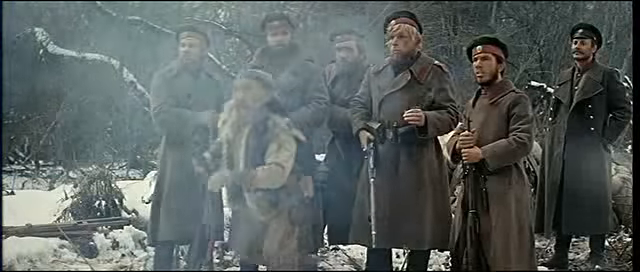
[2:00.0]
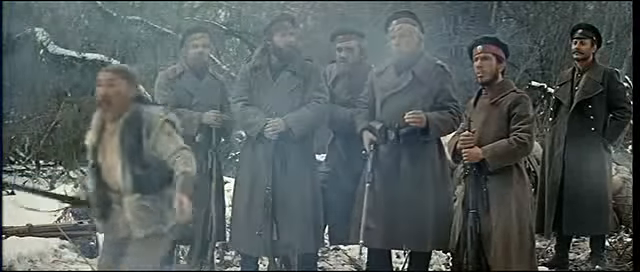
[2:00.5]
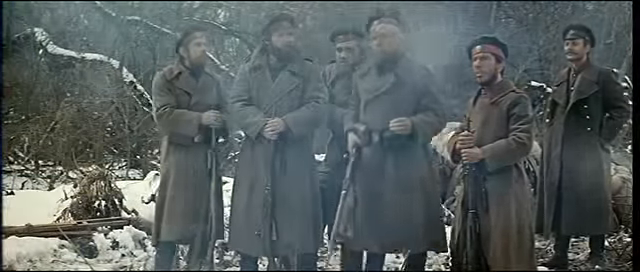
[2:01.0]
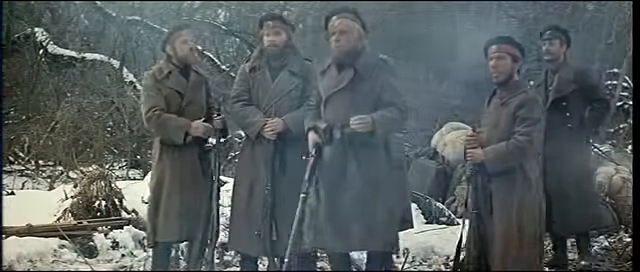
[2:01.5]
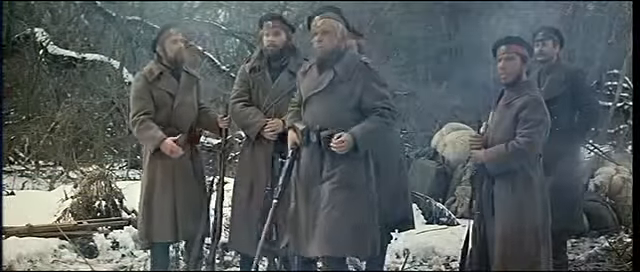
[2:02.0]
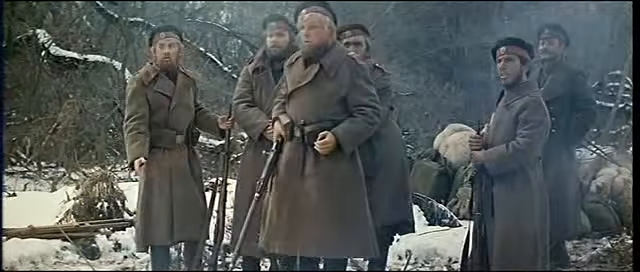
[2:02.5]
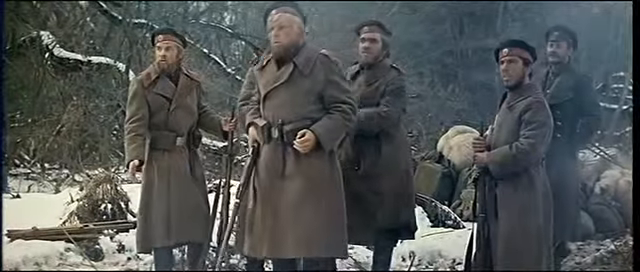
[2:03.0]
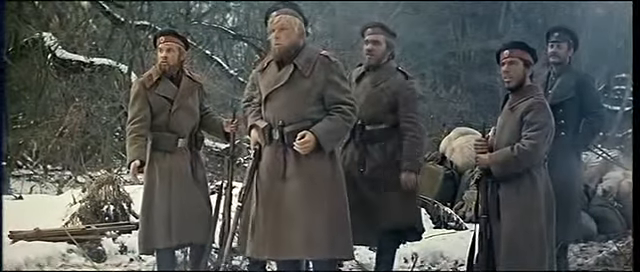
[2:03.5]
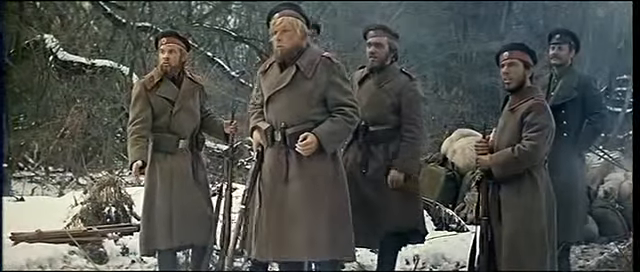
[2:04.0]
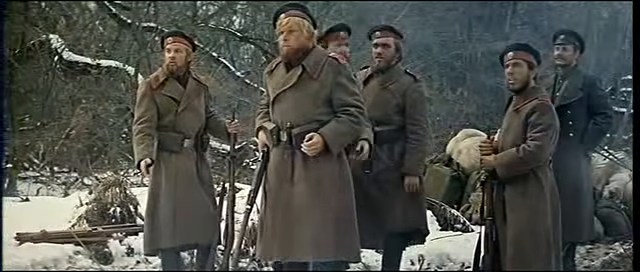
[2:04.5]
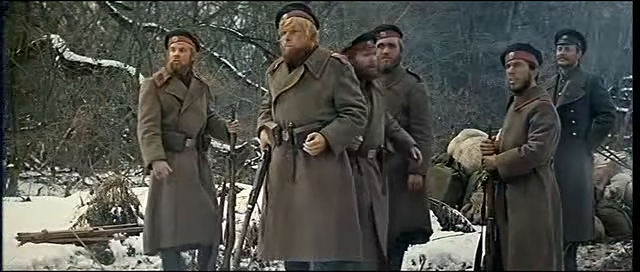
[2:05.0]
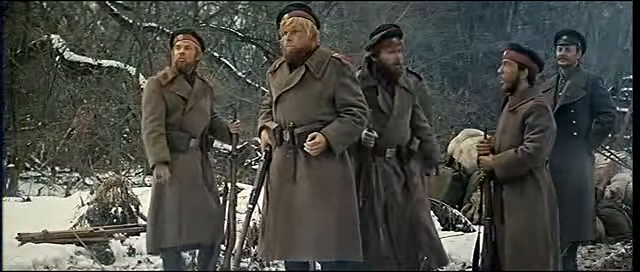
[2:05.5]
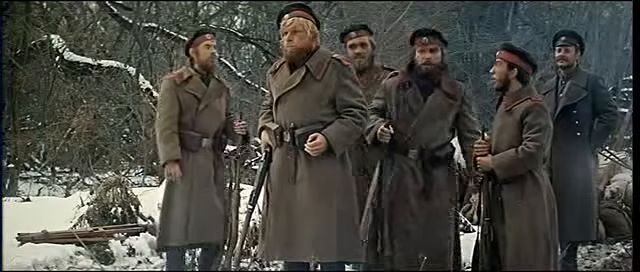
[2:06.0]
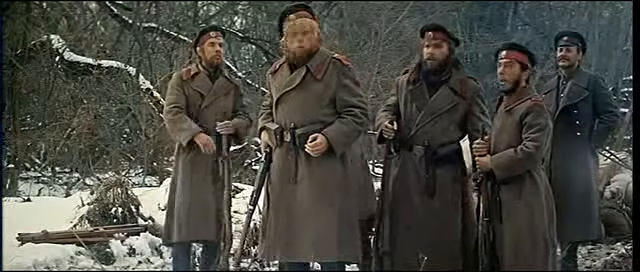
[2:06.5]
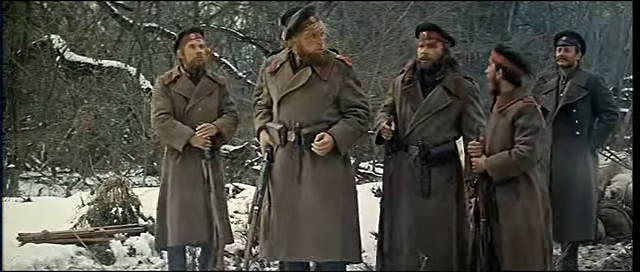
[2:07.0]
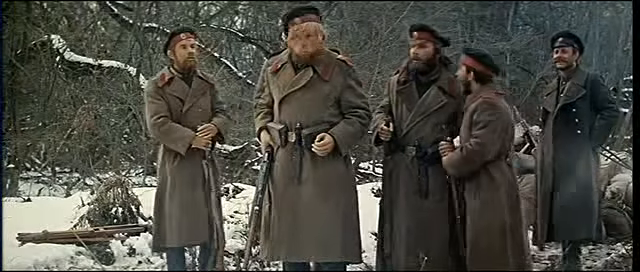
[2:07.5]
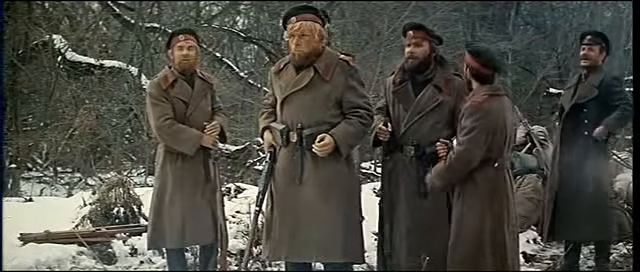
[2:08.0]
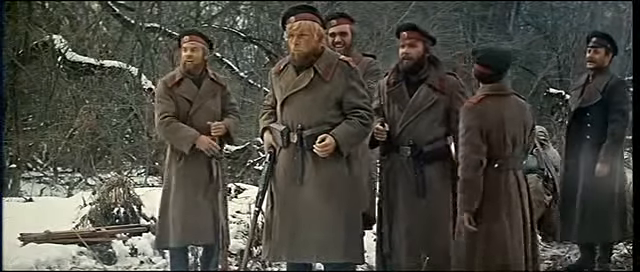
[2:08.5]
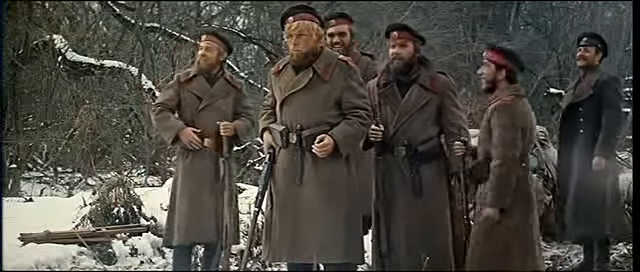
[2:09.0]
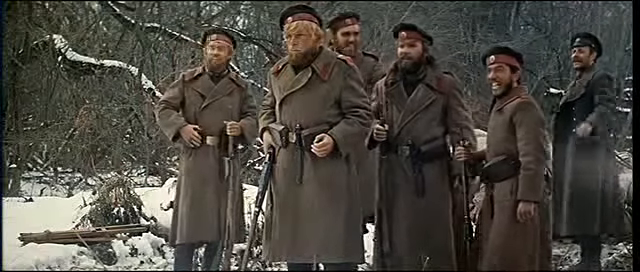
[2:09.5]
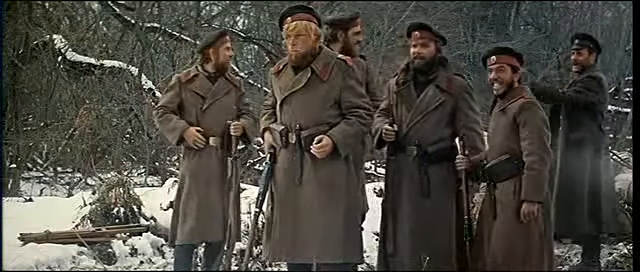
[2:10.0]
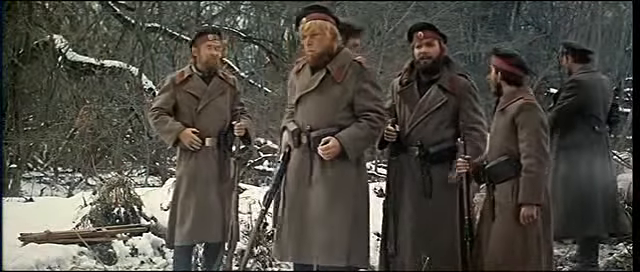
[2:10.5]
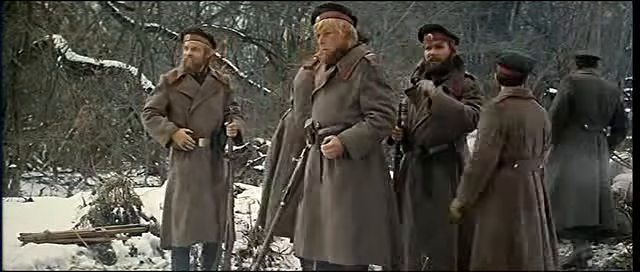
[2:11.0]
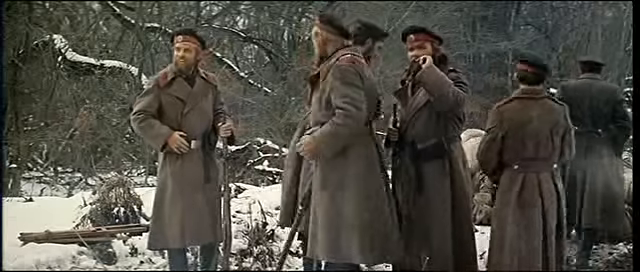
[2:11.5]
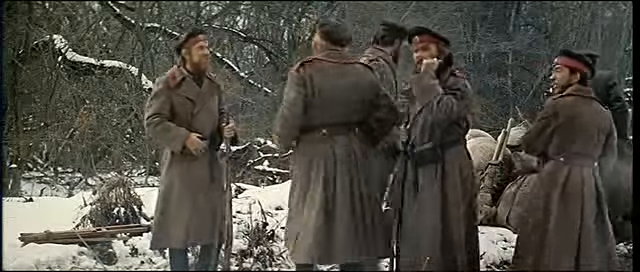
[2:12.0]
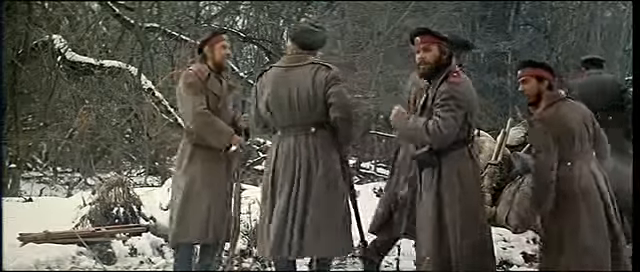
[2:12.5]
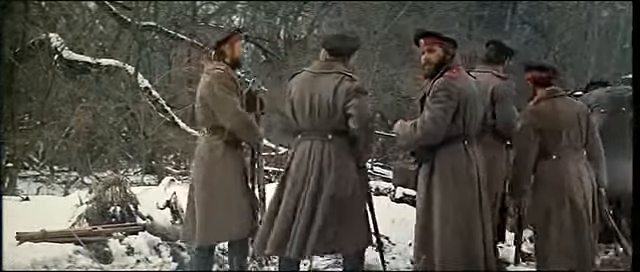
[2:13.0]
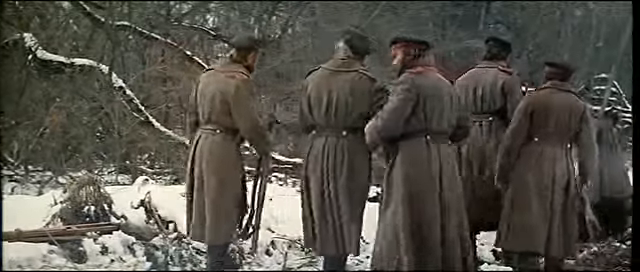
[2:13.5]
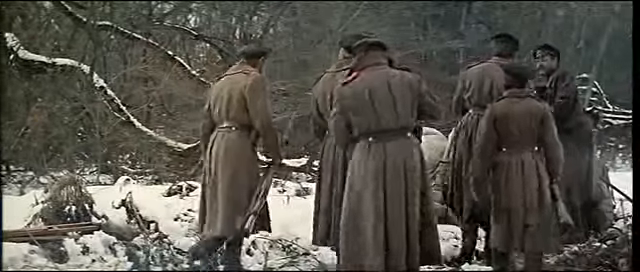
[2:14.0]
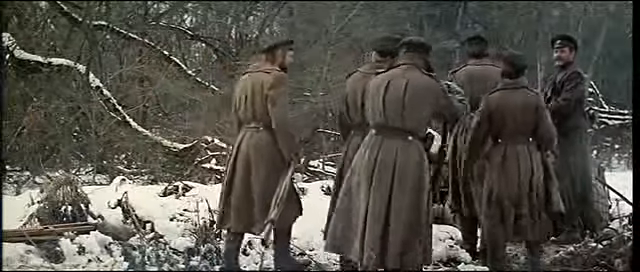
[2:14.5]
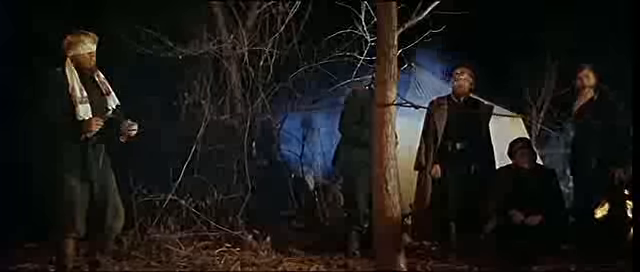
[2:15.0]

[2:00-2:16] The Asian man is in front of all the uniformed men, and he runs out to where the bottle in the tree is. The men look like they are waiting for him and are kind of looking in disbelief or looking at one another, while he laughs. They all then start walking back to their area in the back. The video then cuts to what looks like a completely different scene at night: a kind of tent in the back, in the middle of the forest, with five people present. They all appear to be wearing darker clothes, but it is hard to tell whether they are the same people, since the shot lasts only a split second. The area does not look snowy, so it may be a different scene with a different group of people or a different location.